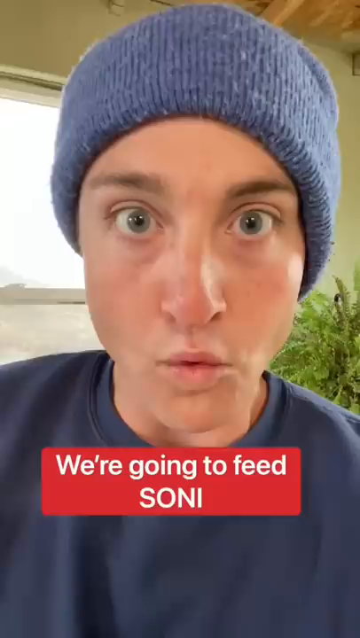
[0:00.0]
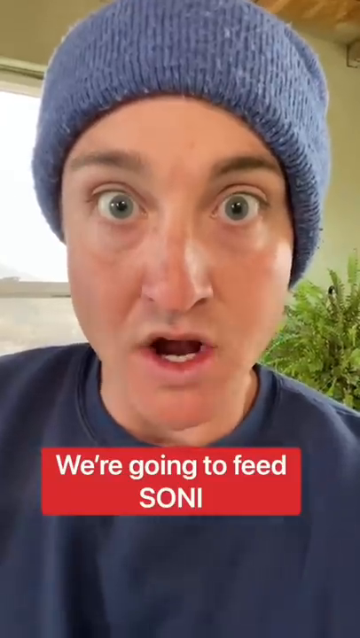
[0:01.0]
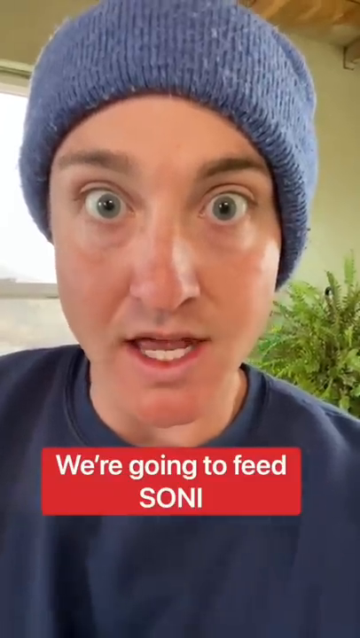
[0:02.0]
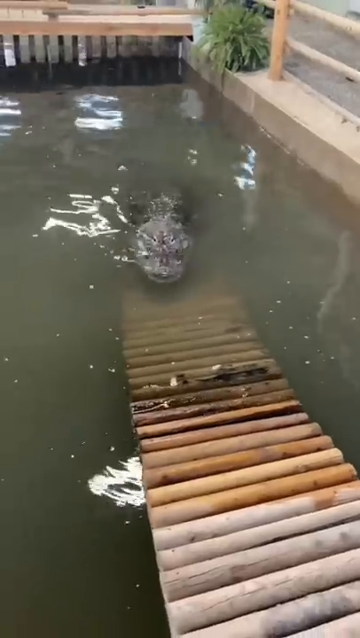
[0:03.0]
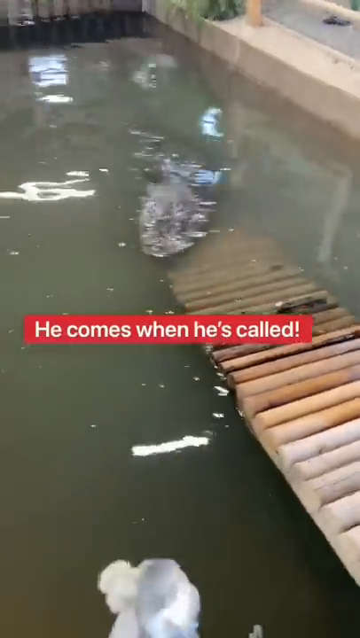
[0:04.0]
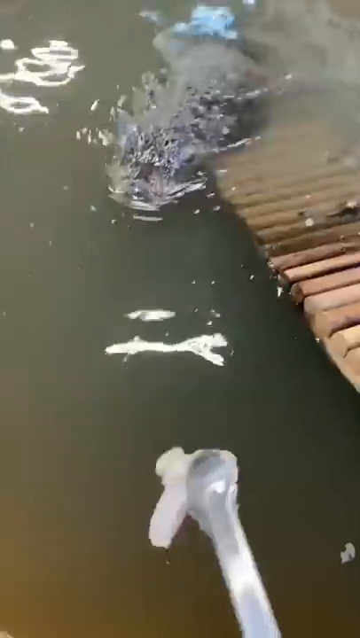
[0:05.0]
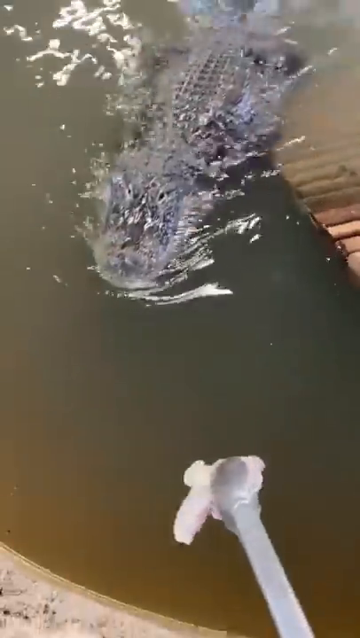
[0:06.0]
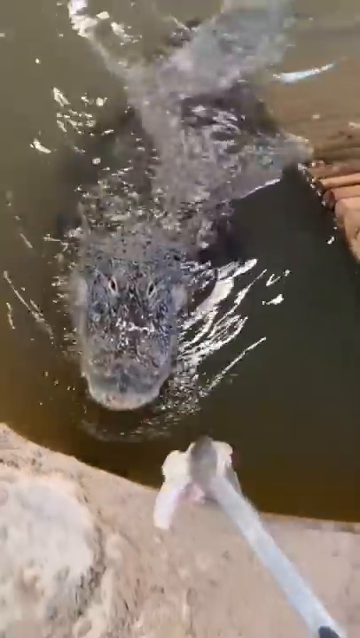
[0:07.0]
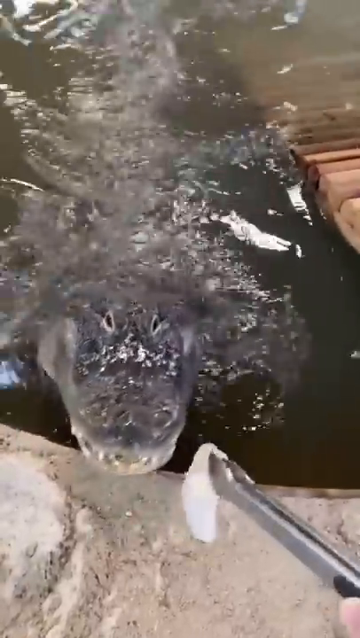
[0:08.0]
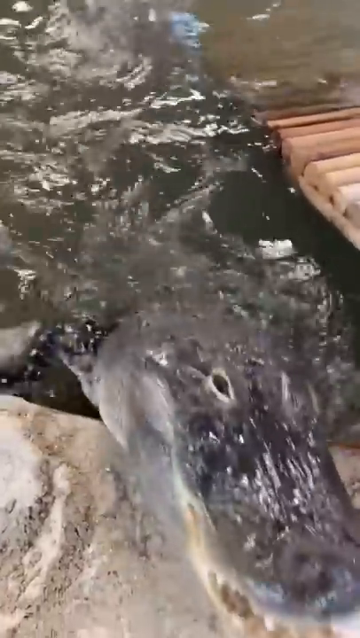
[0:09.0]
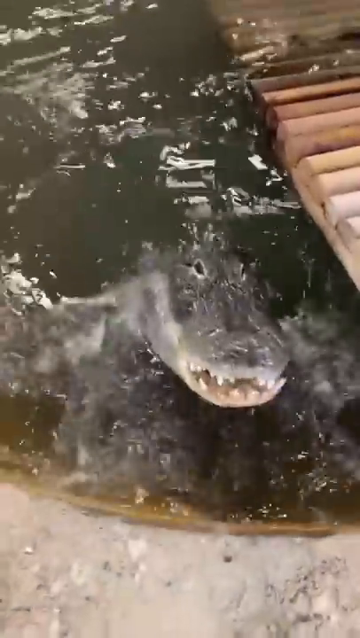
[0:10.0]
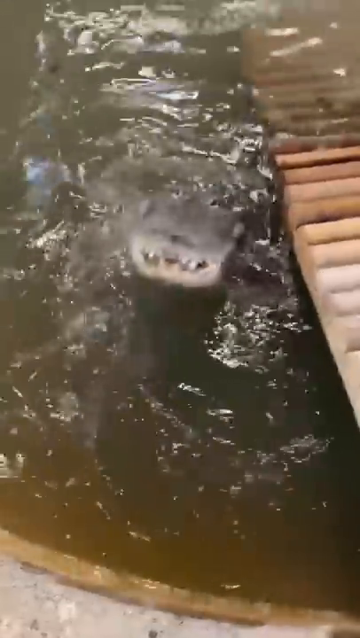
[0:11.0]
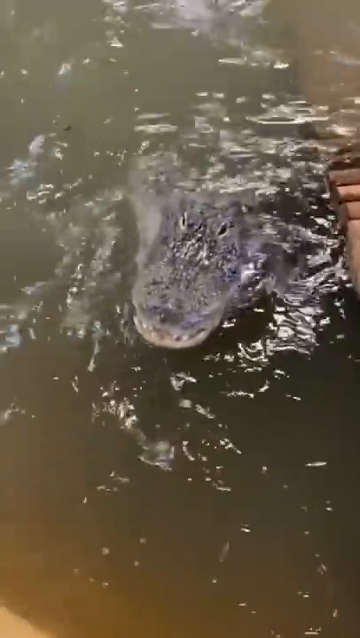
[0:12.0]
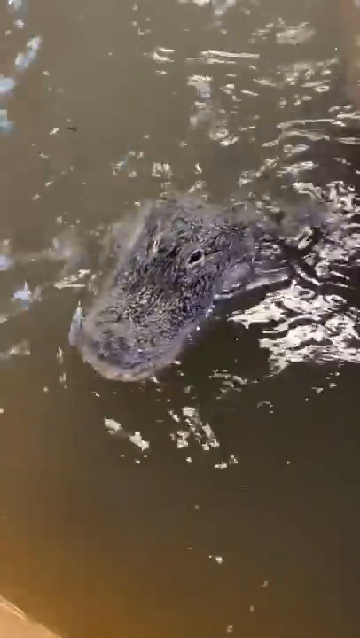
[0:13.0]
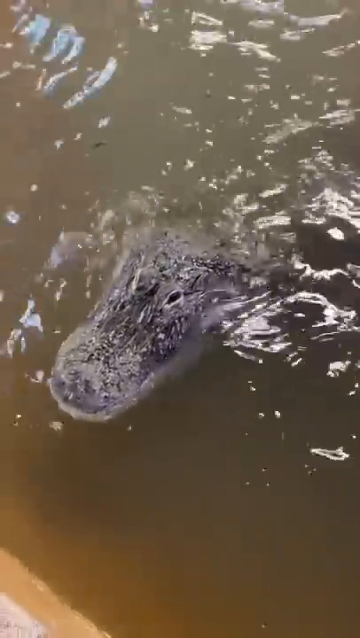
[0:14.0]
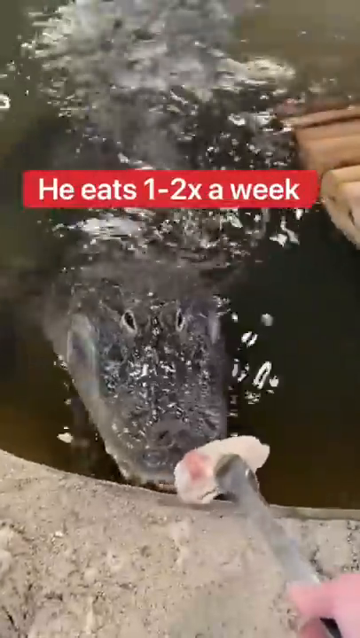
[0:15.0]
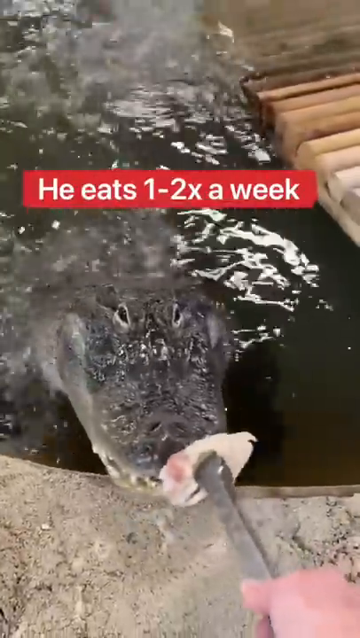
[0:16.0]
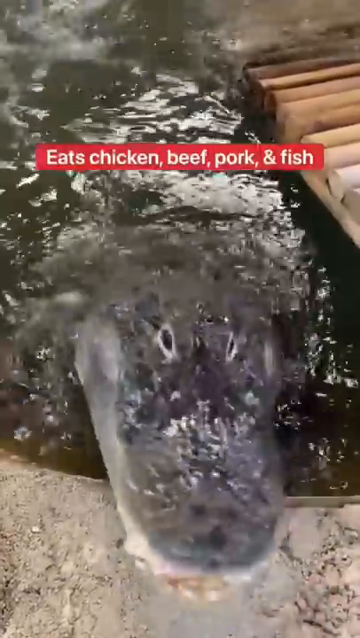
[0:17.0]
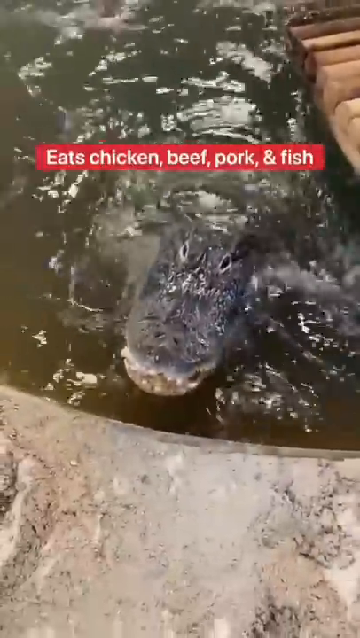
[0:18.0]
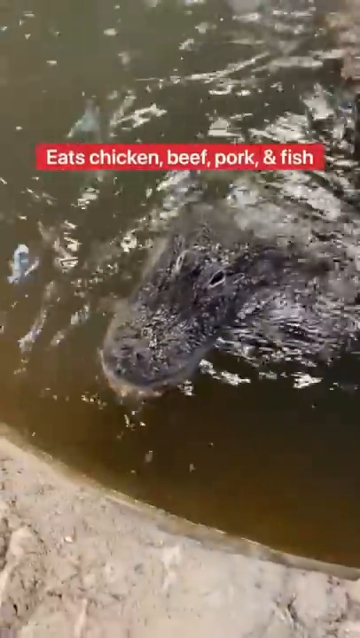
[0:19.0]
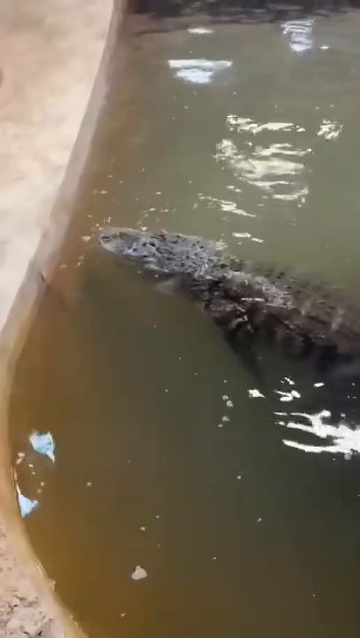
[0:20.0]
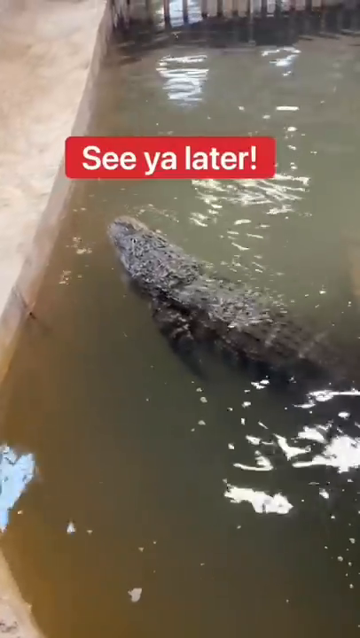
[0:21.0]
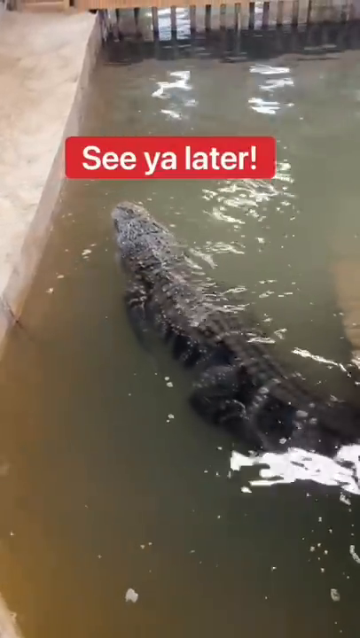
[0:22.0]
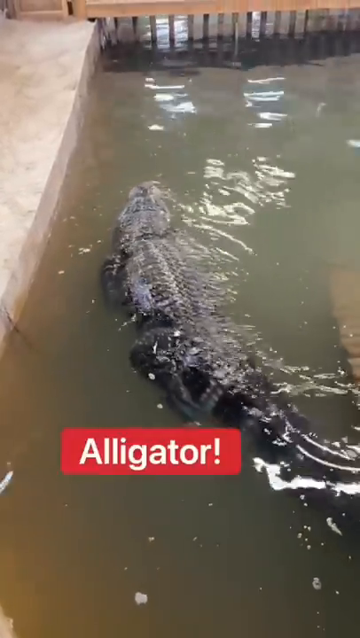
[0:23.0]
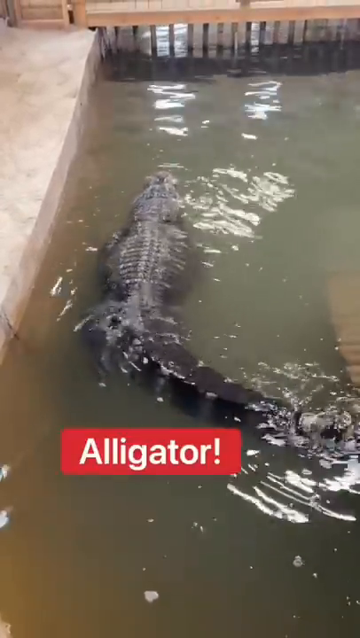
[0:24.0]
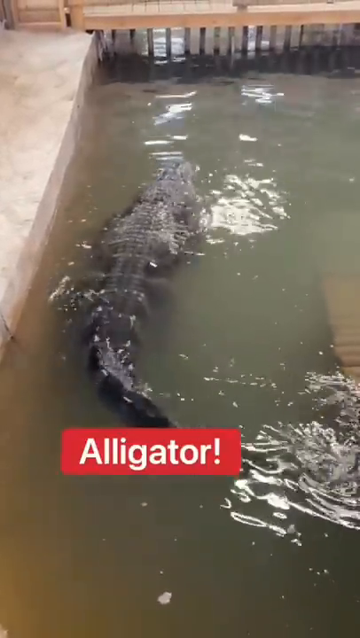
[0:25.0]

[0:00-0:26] The video opens on a person, apparently in their 20s or 30s, Caucasian, with very bright, vivid light blue or green eyes. They are wearing all blue and are very close up on the screen. A caption reads "We Are Going To Feed SONI". Next comes a very large looking alligator, presumably Soni, kind of swimming in what looks like a pond, though it doesn't look like much more than a kiddie pool. There are some bars on the enclosure, and it seems somewhat secure. The video then flashes to the person feeding Soni the alligator, holding out meat, probably some sort of fish or chicken, with tongs that look like a simple pair of barbecue tongs.